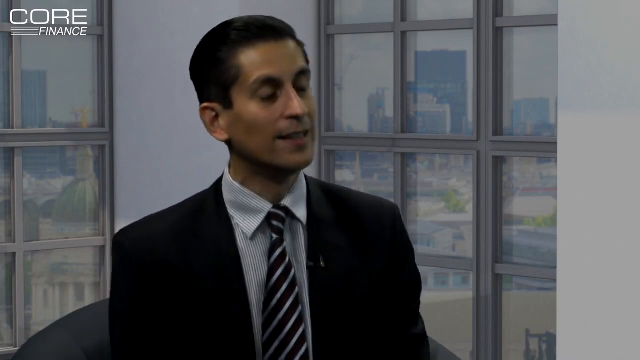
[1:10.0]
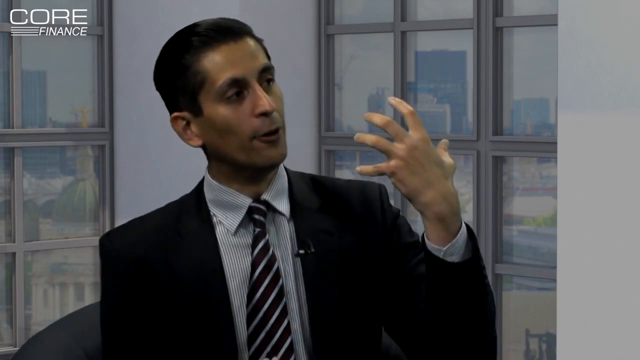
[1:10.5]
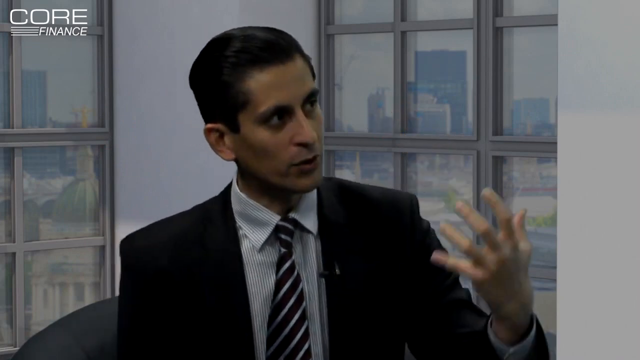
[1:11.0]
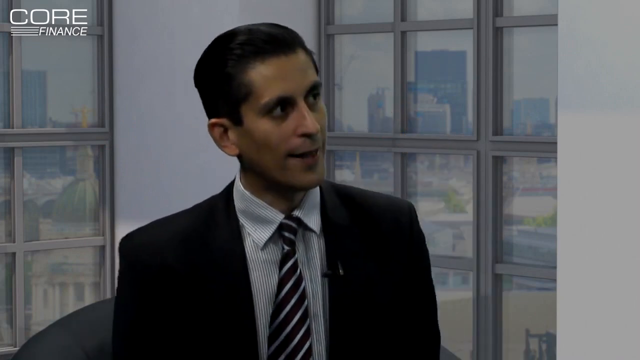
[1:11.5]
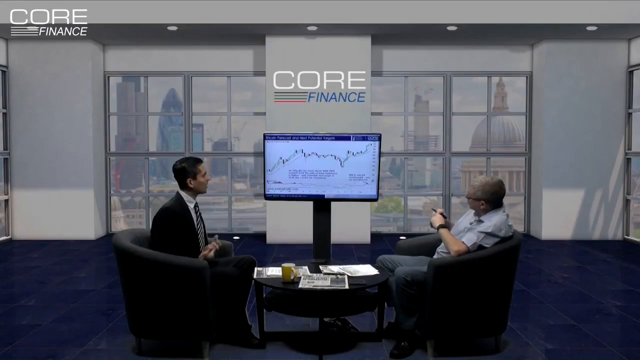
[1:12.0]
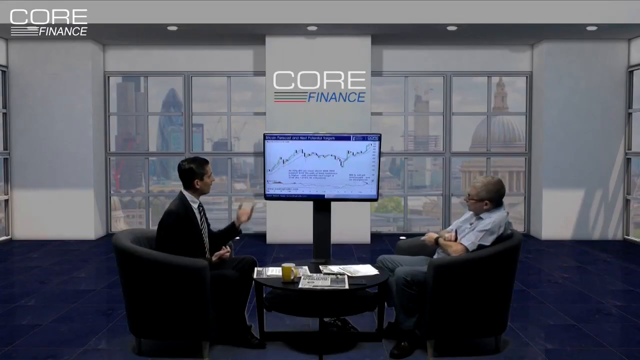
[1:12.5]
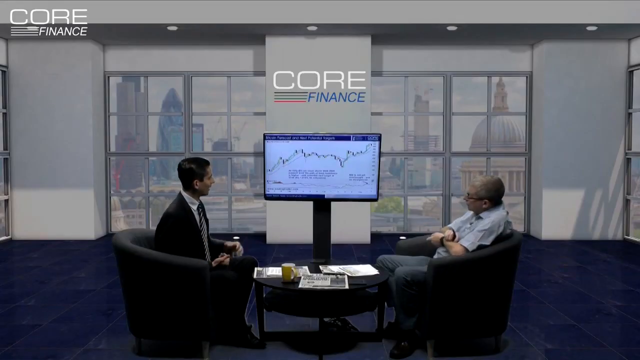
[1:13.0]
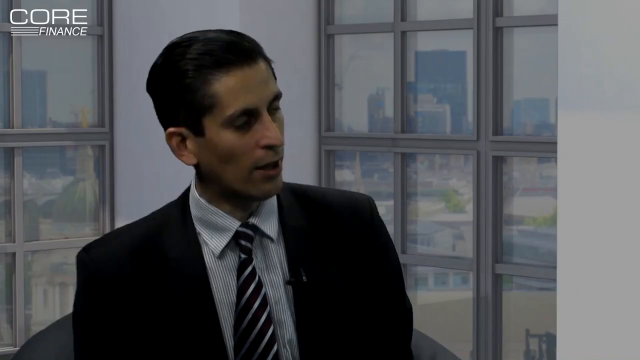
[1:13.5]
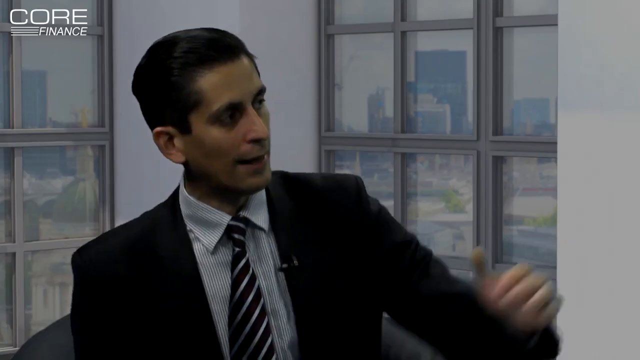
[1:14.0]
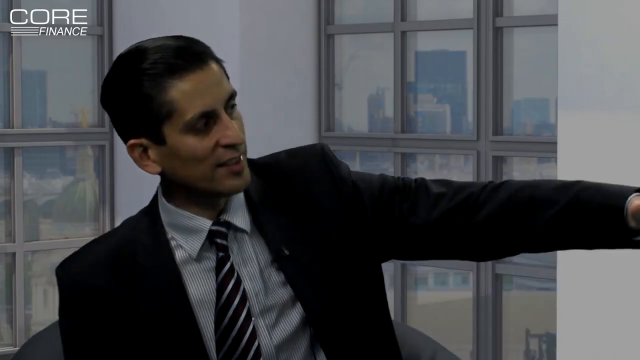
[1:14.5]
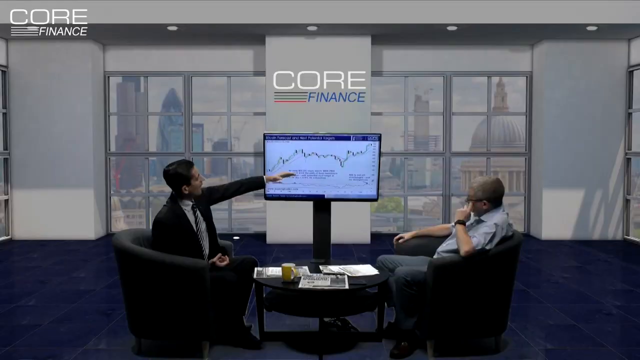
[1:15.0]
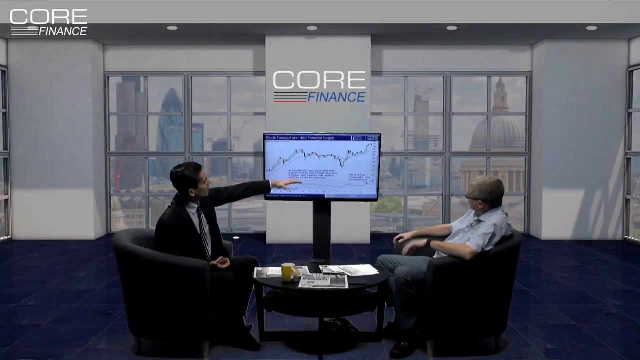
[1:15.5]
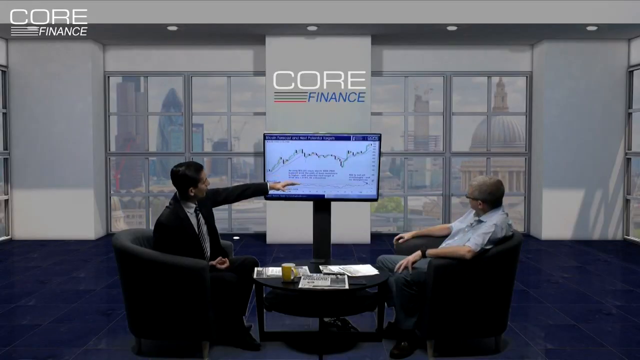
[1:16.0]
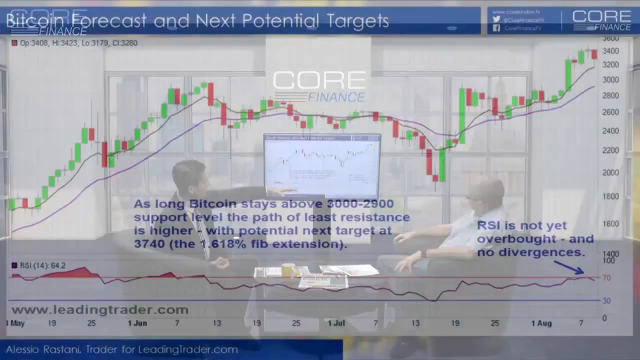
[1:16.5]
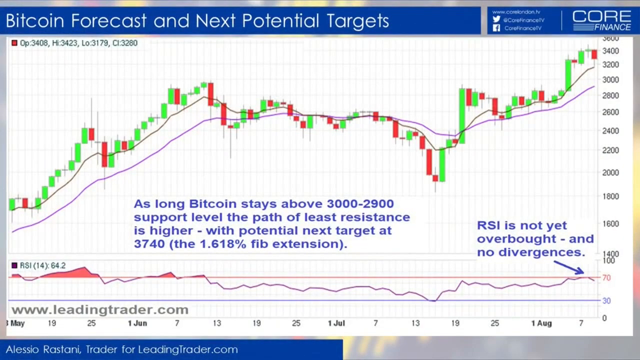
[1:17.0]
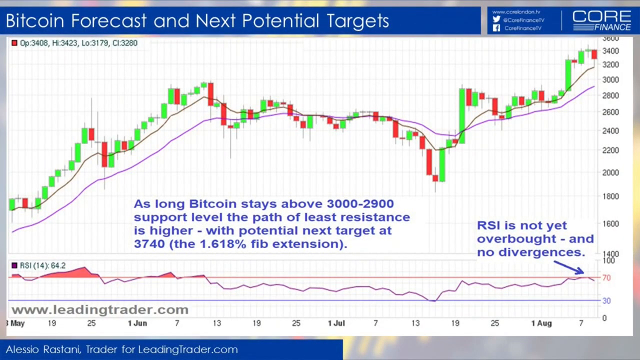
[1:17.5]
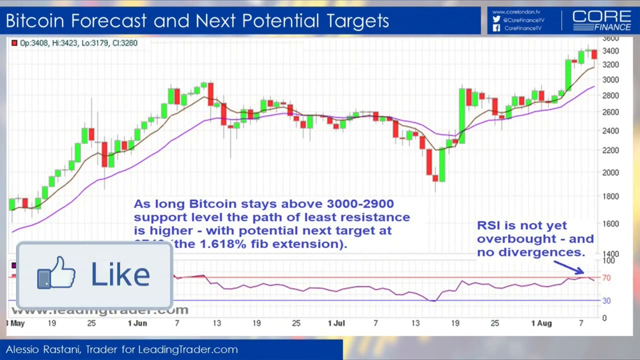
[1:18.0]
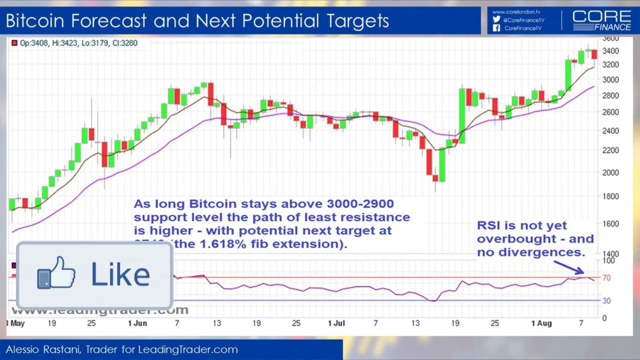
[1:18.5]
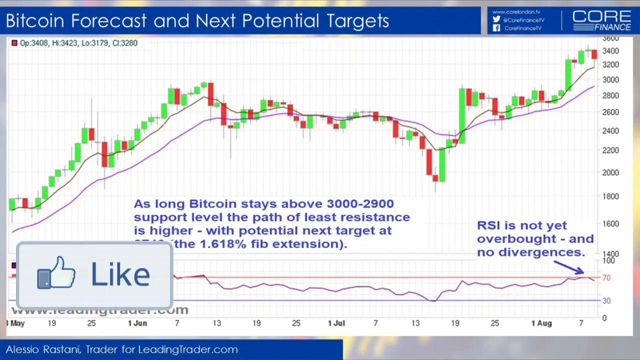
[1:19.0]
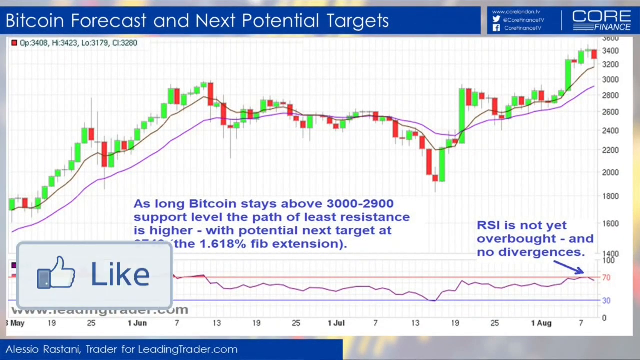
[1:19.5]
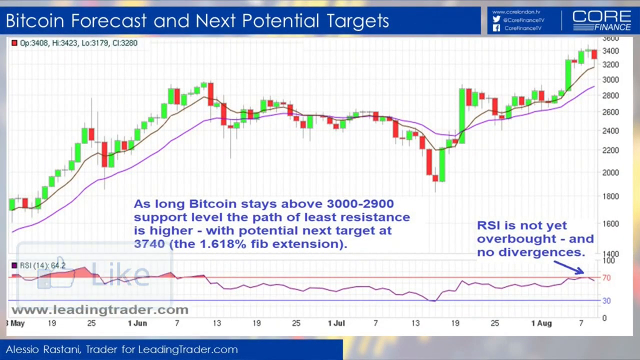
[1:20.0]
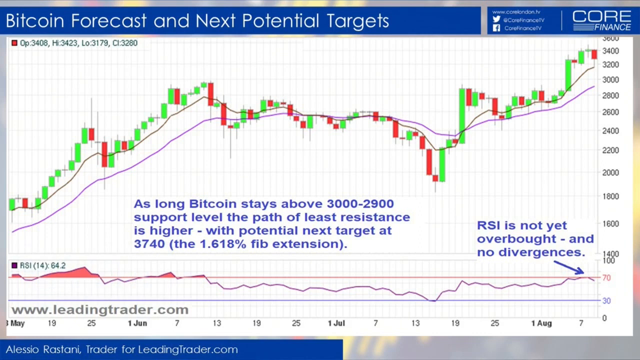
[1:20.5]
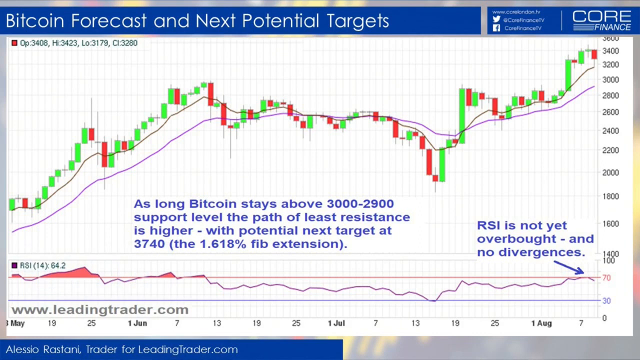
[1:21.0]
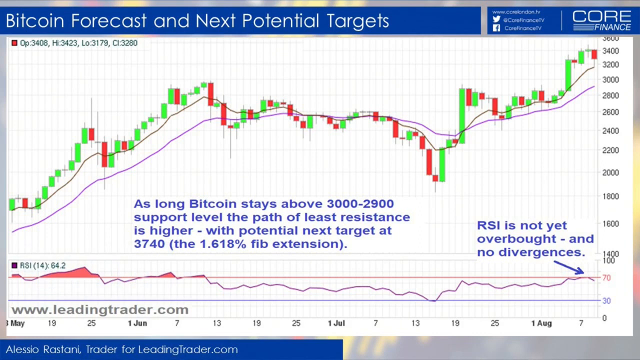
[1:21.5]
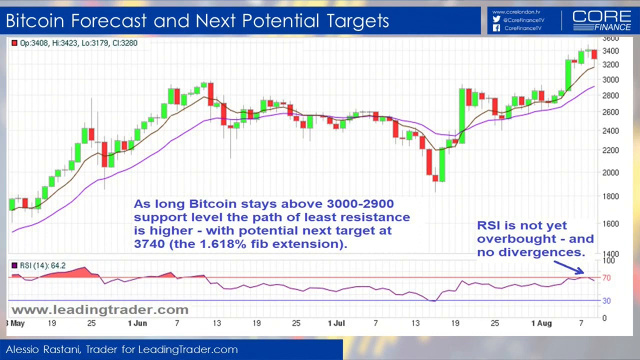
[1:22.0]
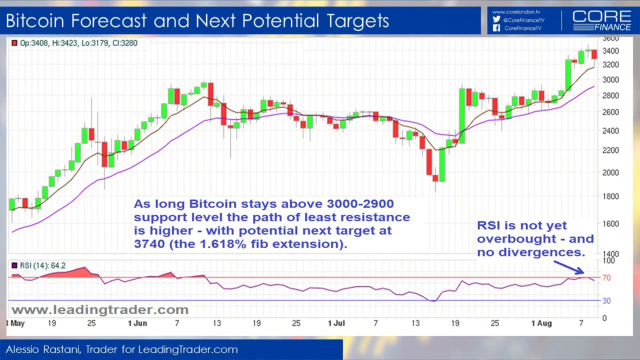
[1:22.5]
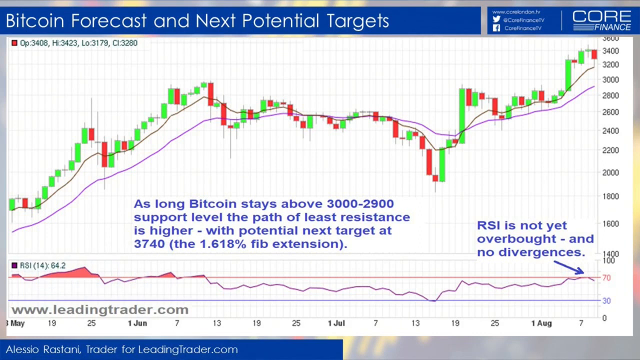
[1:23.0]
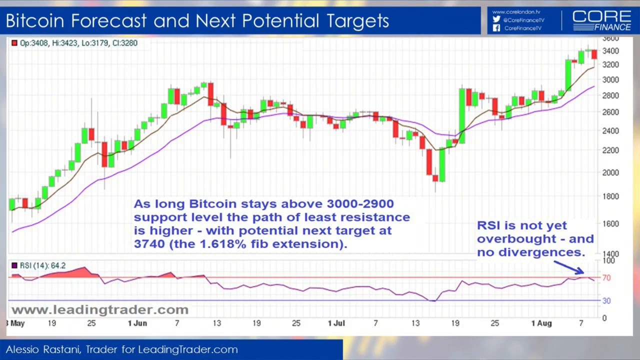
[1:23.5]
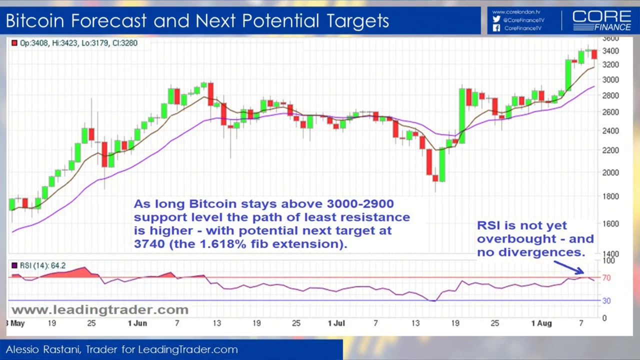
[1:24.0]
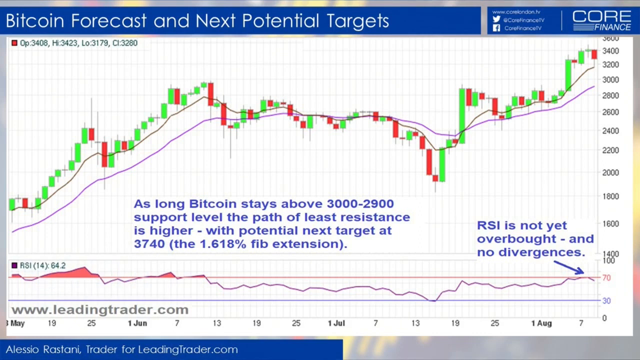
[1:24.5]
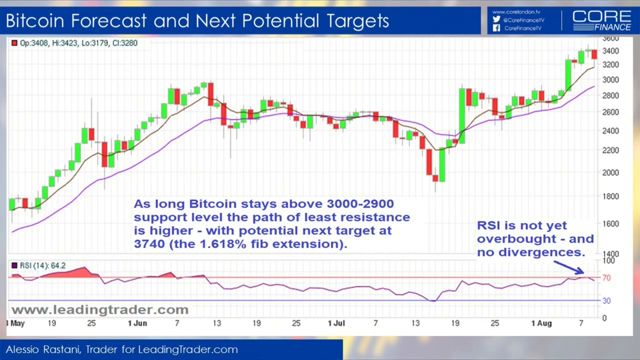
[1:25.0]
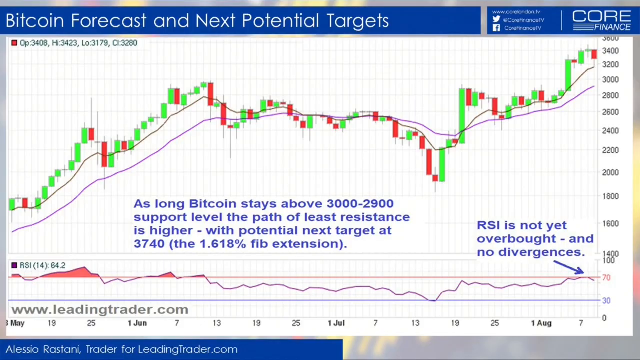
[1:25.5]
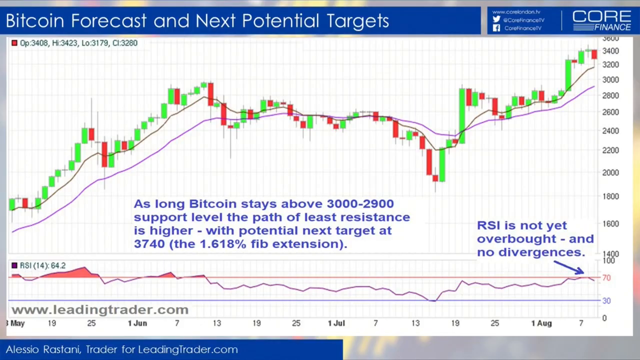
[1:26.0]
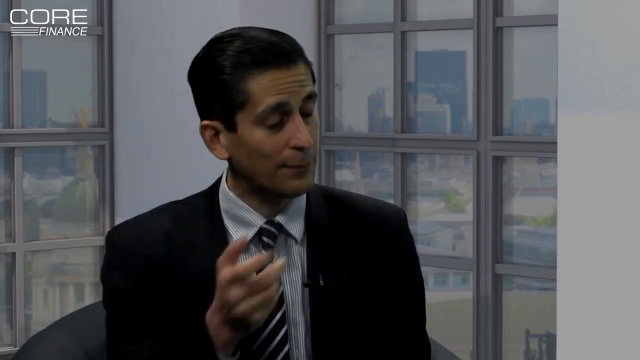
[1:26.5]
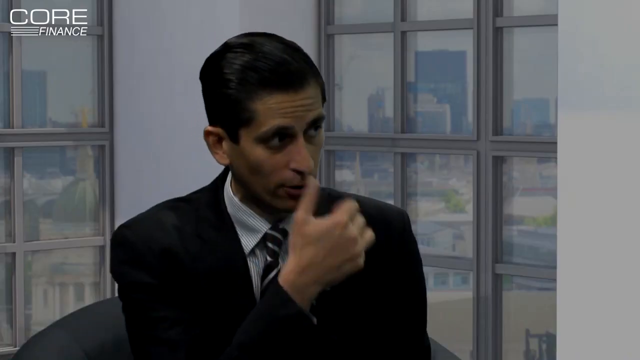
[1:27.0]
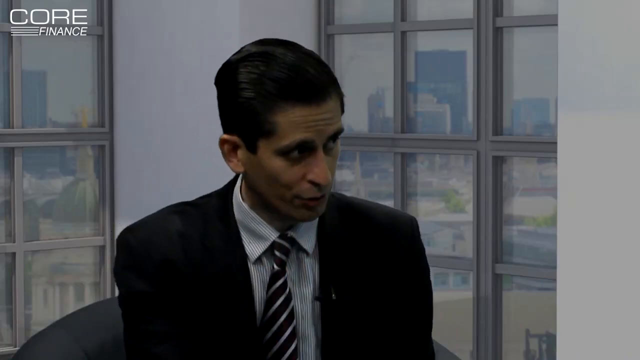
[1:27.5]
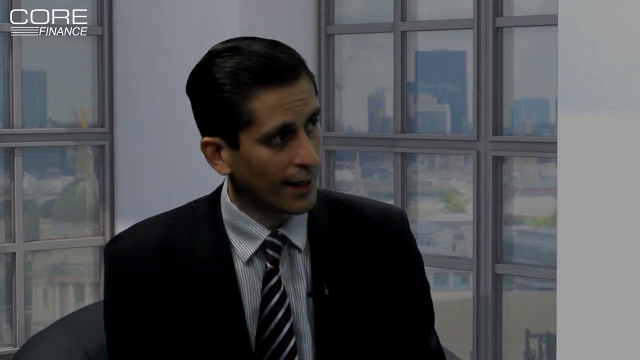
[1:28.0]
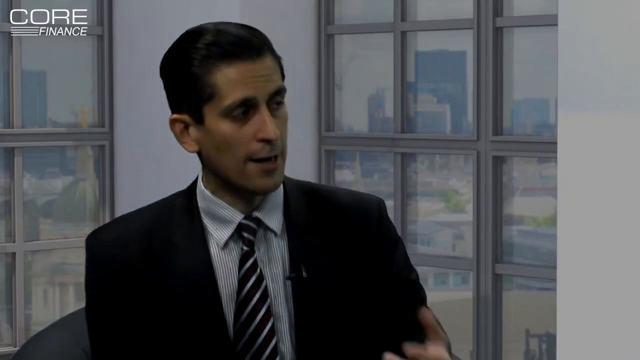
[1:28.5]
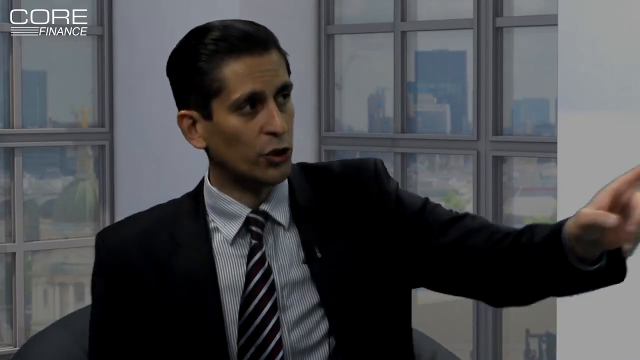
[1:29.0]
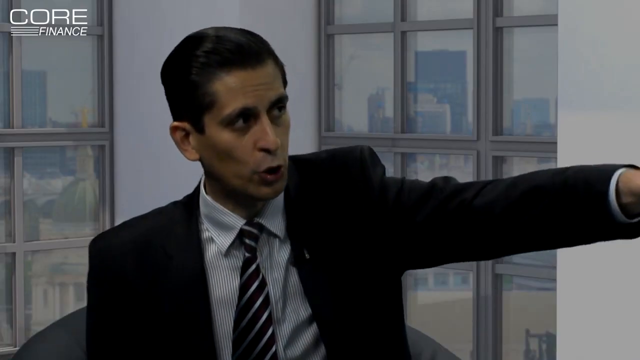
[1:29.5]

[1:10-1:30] The two are having an engaging conversation and seem to be agreeing with one another. They talk while pointing at the chart displayed on the monitor screen, gesturing with their hands and nodding their heads. The person in the black suit, who has black hair, is constantly talking. The building has large square windows; every angle shows a window, and they show quite a bit of the outside world. On the table there is only one yellow mark, which has a white interior; it is closer to the person on the left, who is the one wearing the suit. There are also papers on the table: three on the side and one at the front, closer to the viewer. The couches are black and quite short, so the men's knees are slightly elevated. "Core Finance" is written on the middle wall in LED light, with the "Core" text lit white.